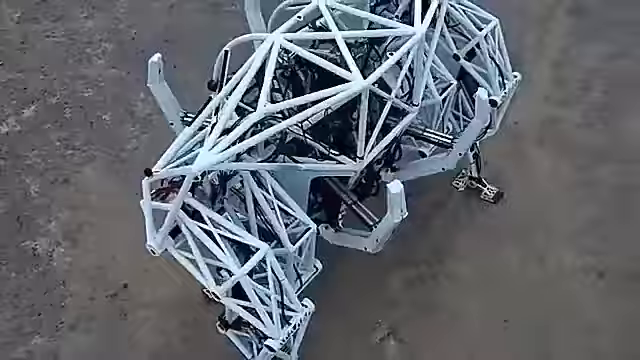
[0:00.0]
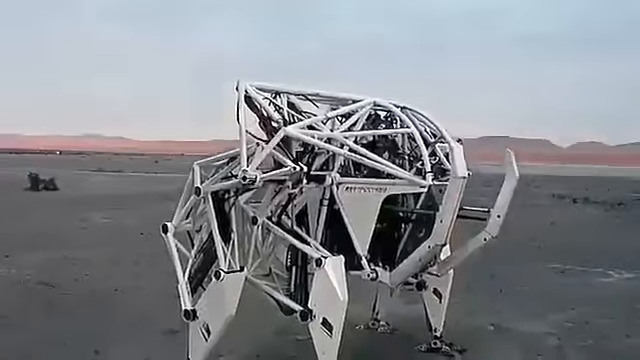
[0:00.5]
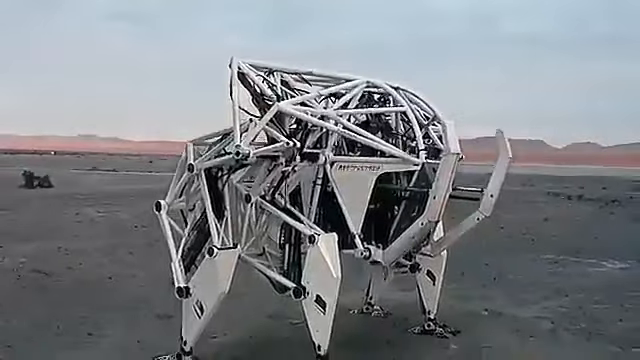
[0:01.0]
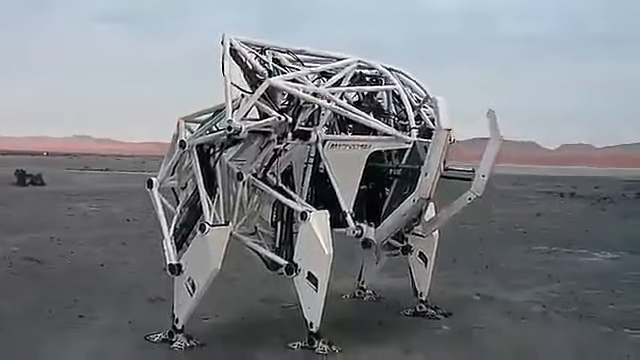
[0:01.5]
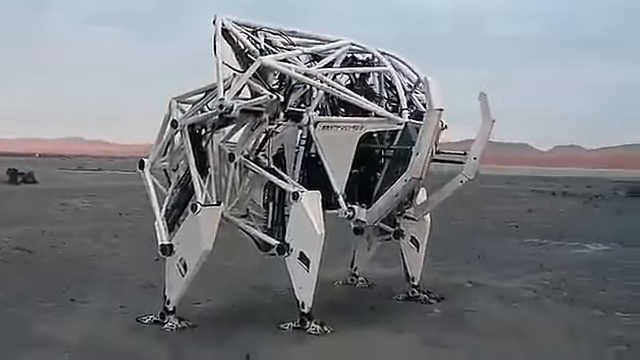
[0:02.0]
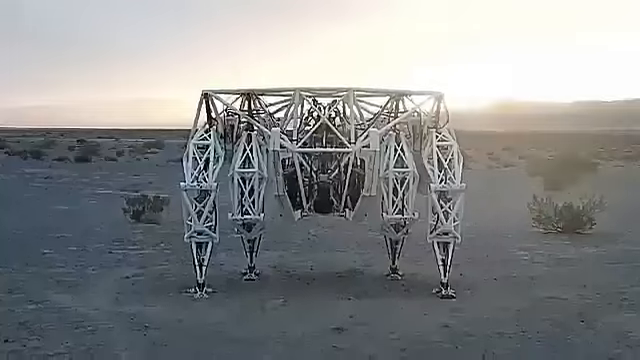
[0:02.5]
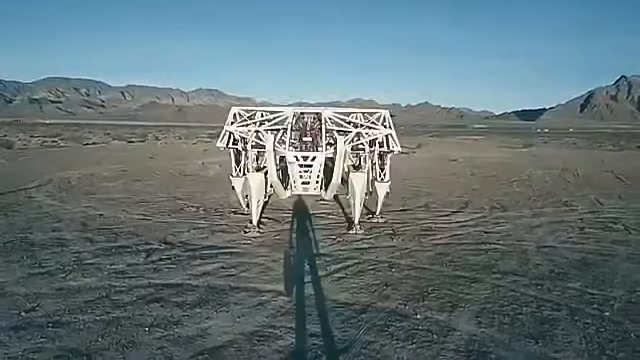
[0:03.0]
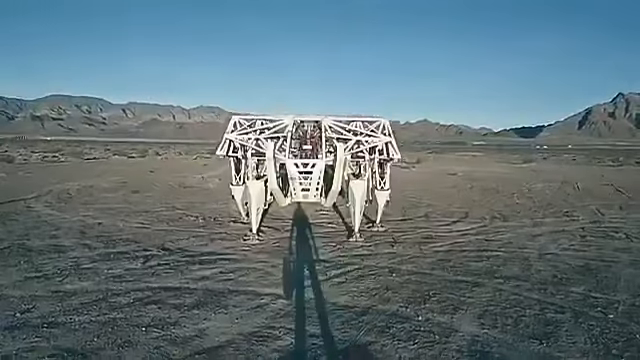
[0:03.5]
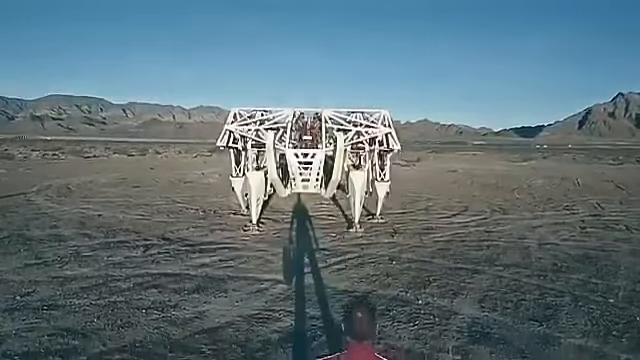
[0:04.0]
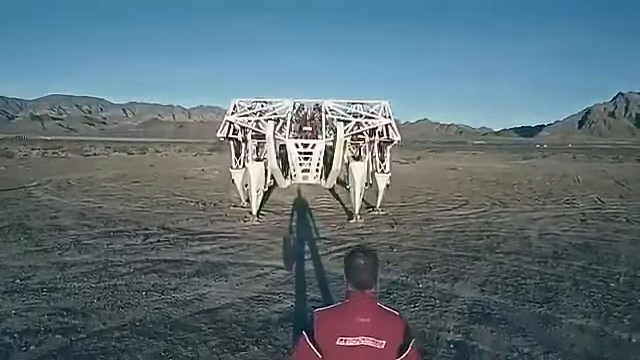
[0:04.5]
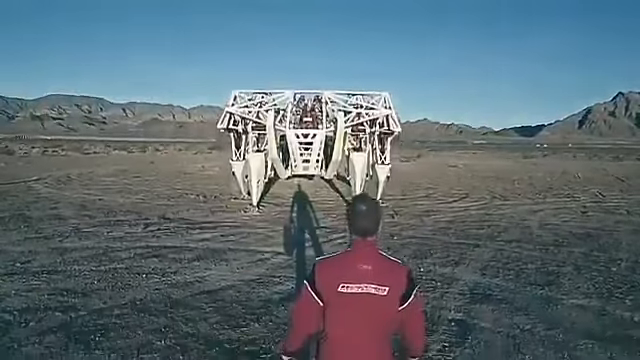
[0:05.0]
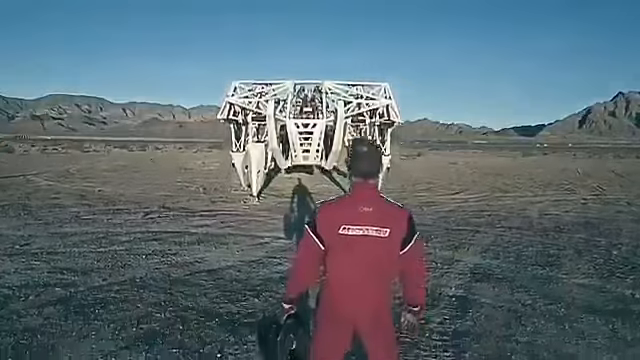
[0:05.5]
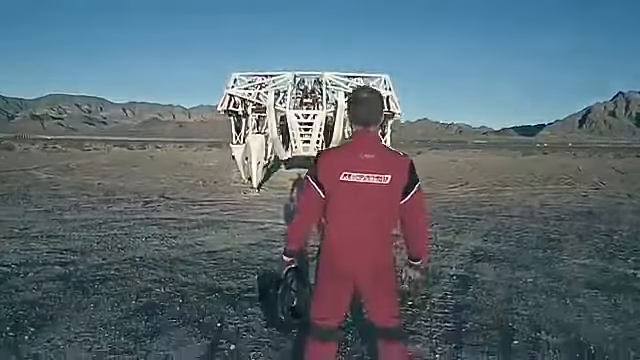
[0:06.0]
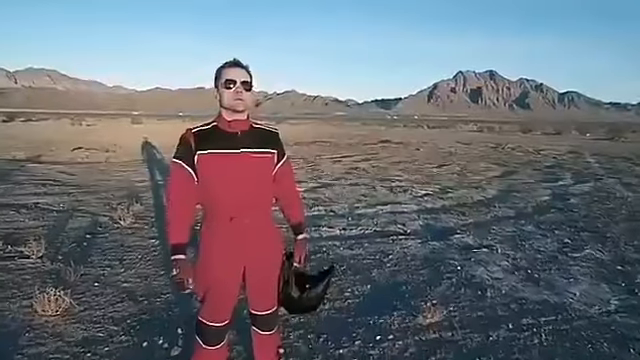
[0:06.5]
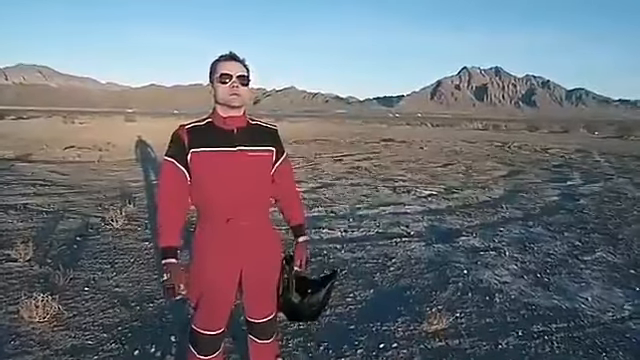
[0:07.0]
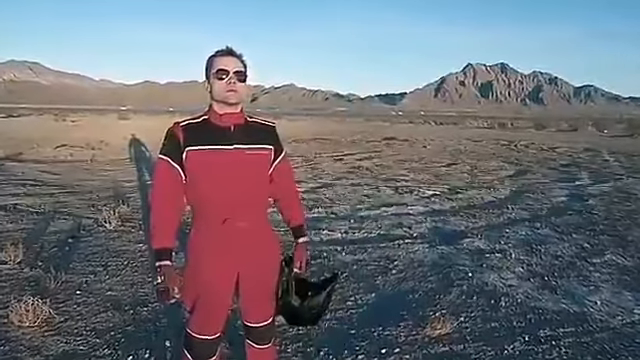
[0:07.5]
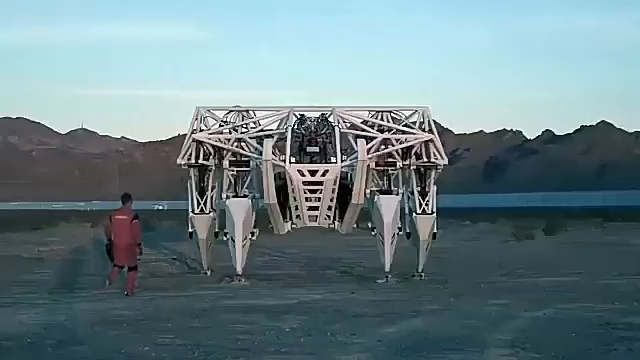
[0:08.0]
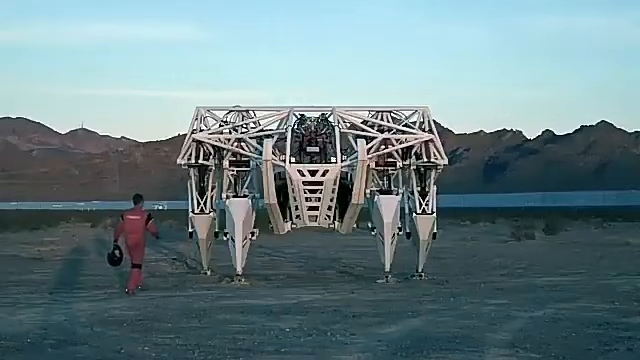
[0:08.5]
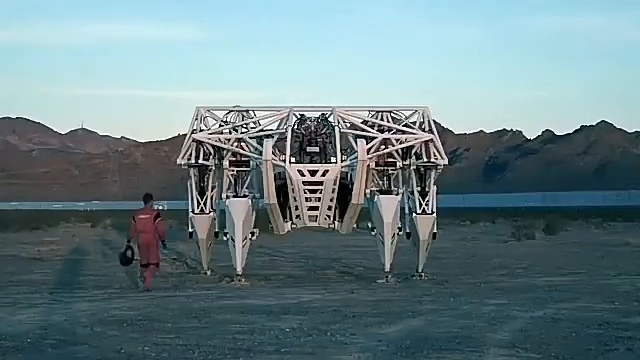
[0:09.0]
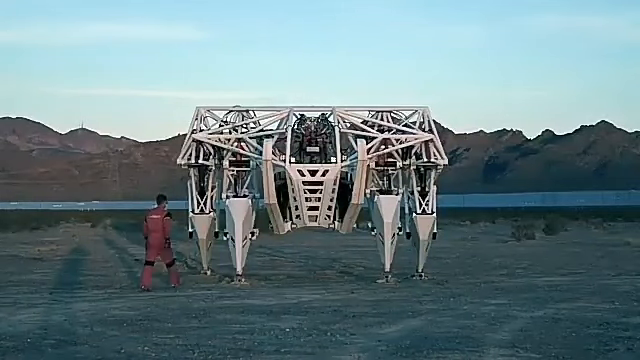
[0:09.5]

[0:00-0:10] The setting looks like it could be another planet but is most likely a desert, probably somewhere like Death Valley. A person is dressed in what looks like a racing outfit, the kind worn to race cars around a track. Instead of a race car, he gets into what looks like a futuristic mech machine, a robot a person can get inside of and walk around in. Wearing sunglasses, he looks excited and stares toward the machine as if getting ready to test it.